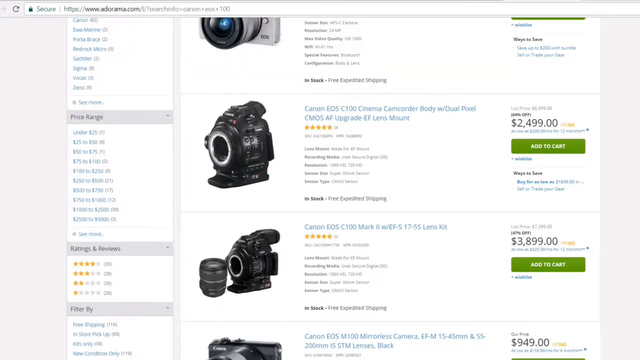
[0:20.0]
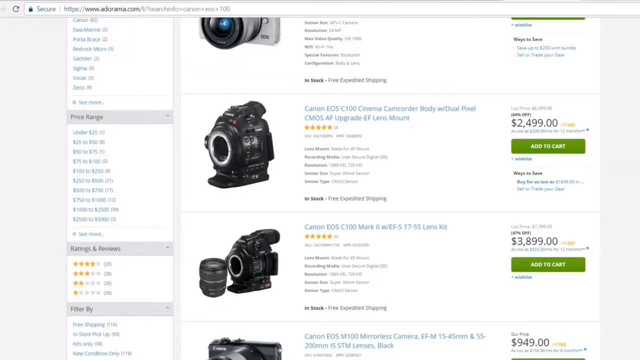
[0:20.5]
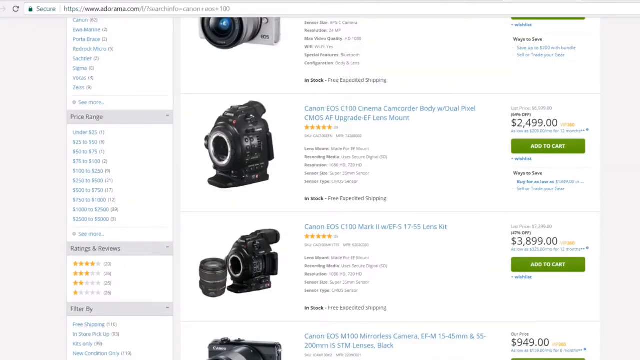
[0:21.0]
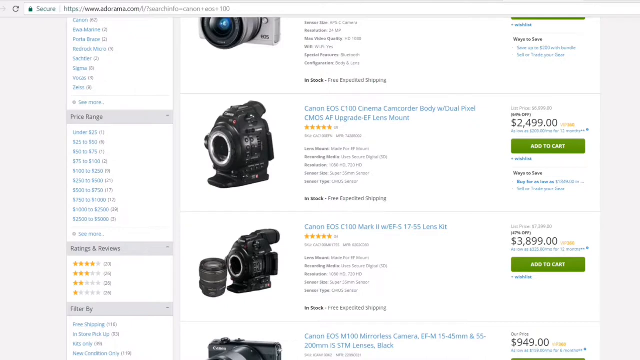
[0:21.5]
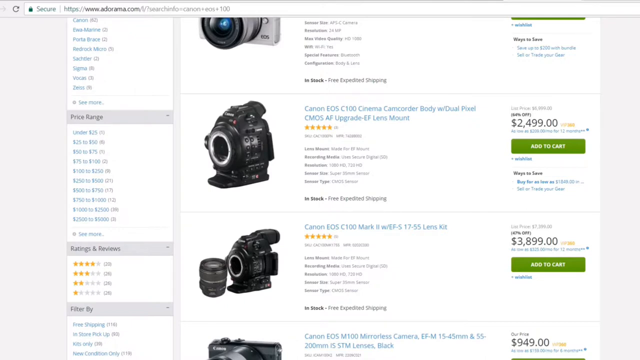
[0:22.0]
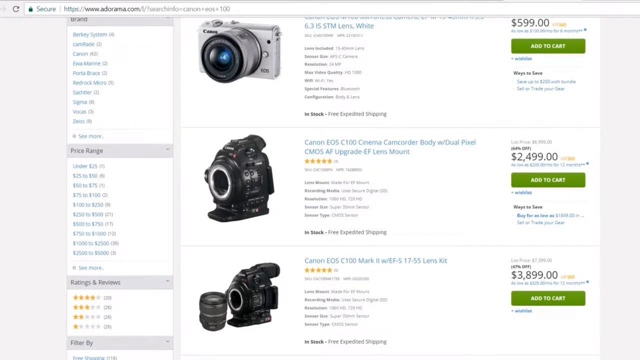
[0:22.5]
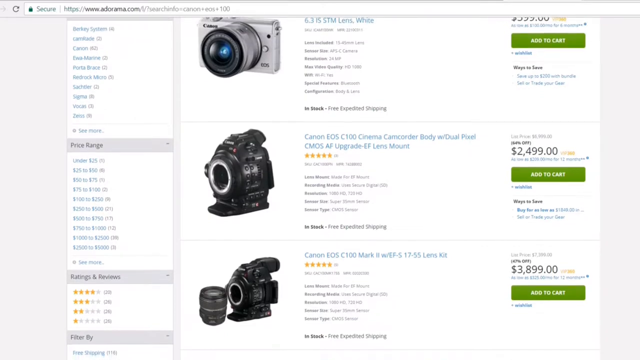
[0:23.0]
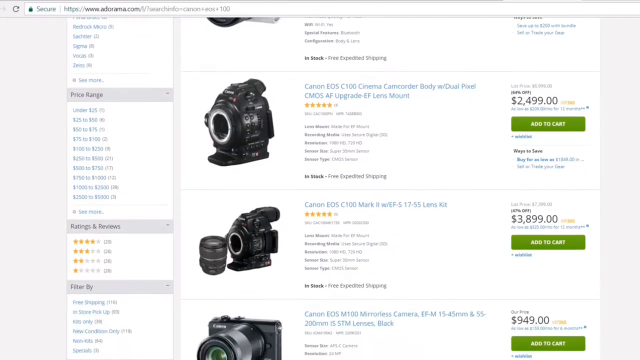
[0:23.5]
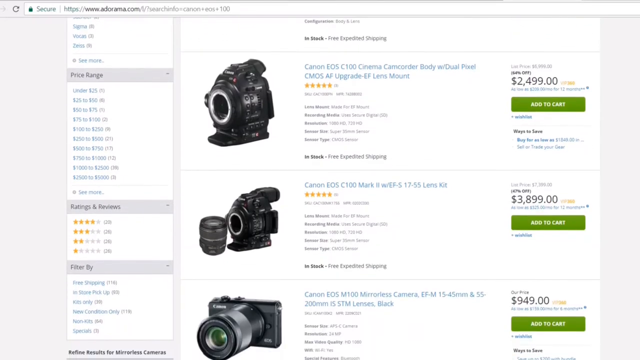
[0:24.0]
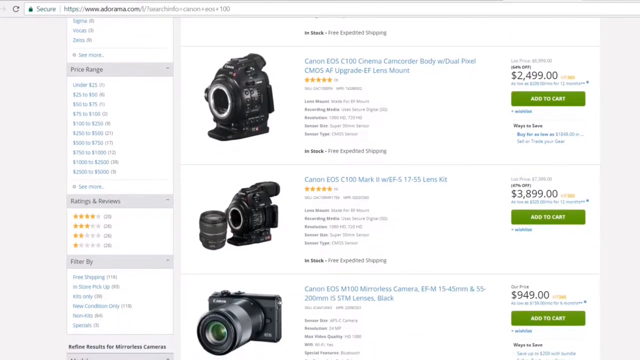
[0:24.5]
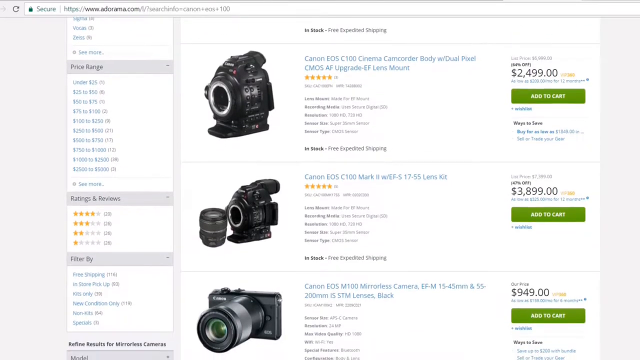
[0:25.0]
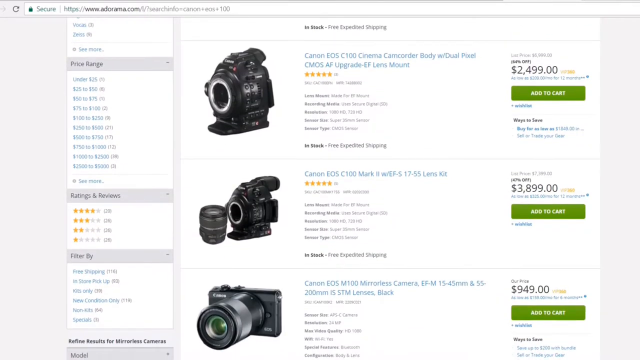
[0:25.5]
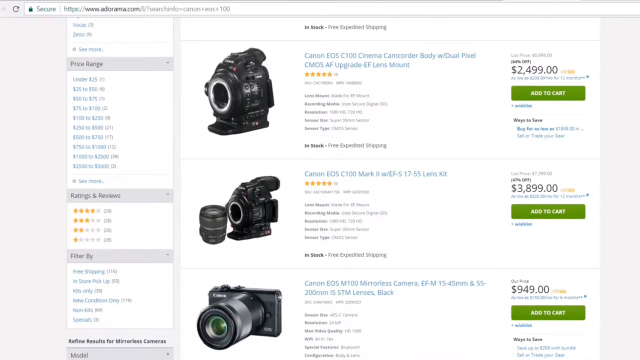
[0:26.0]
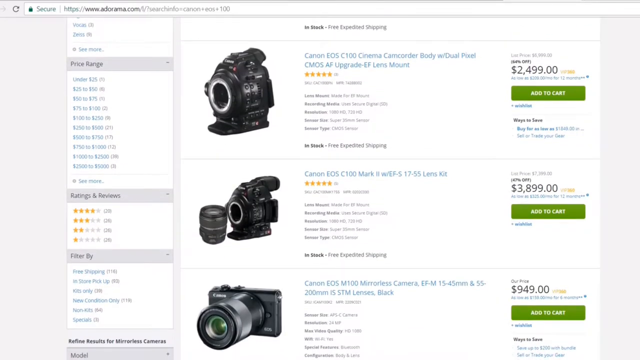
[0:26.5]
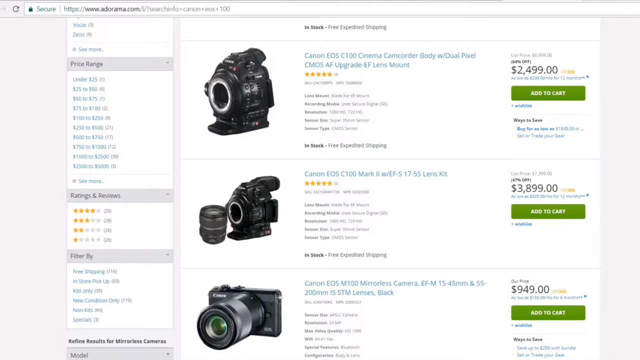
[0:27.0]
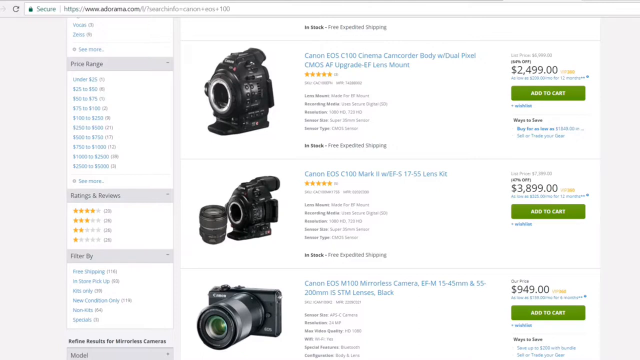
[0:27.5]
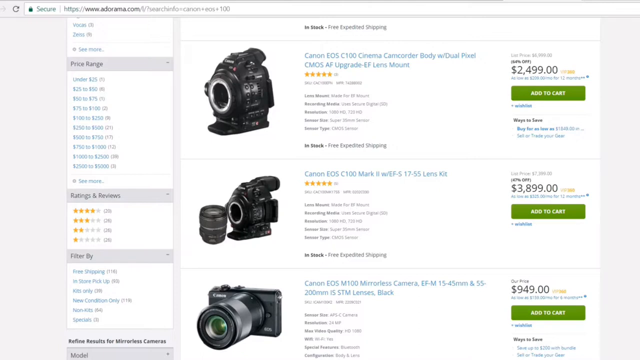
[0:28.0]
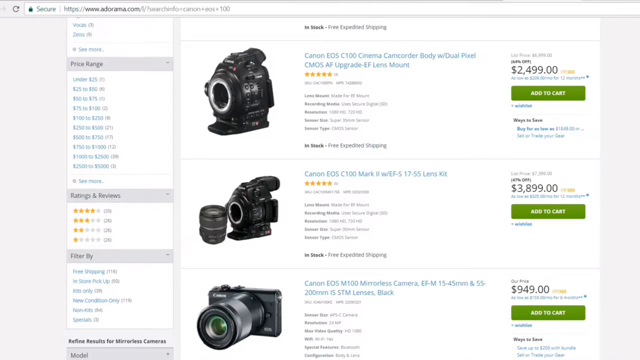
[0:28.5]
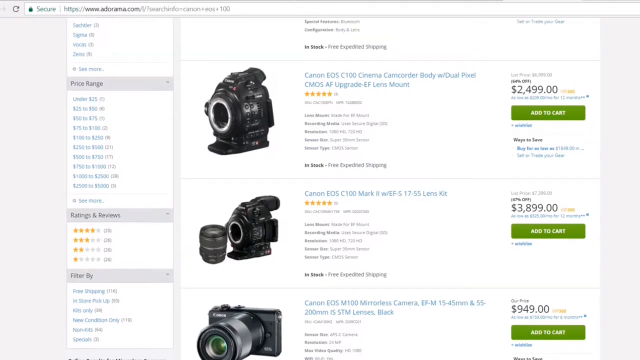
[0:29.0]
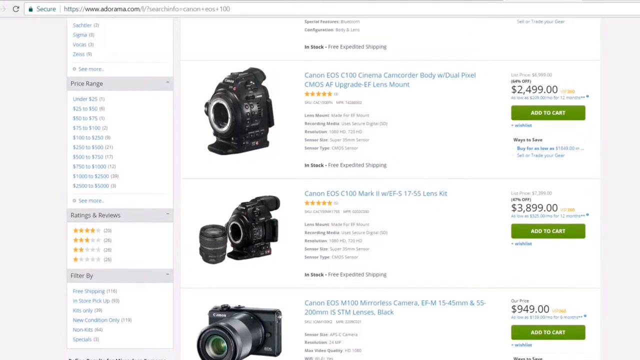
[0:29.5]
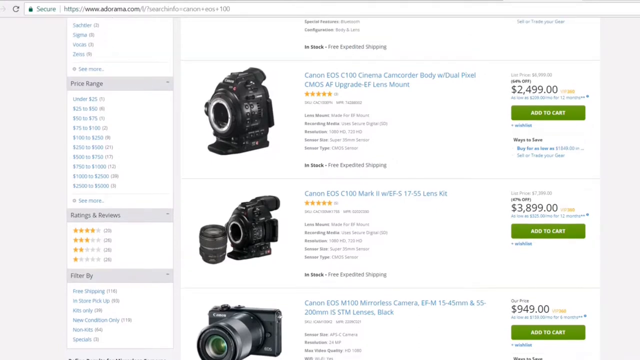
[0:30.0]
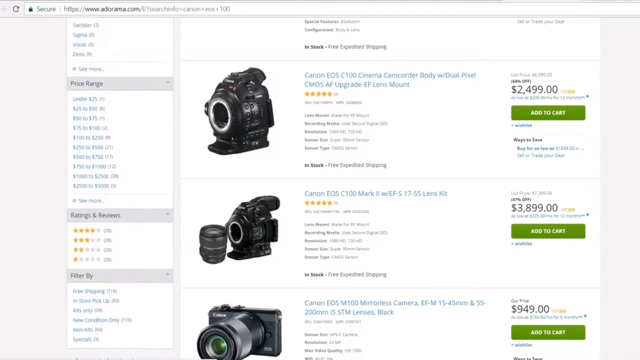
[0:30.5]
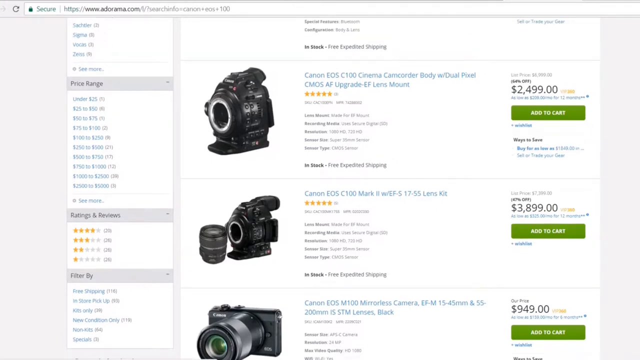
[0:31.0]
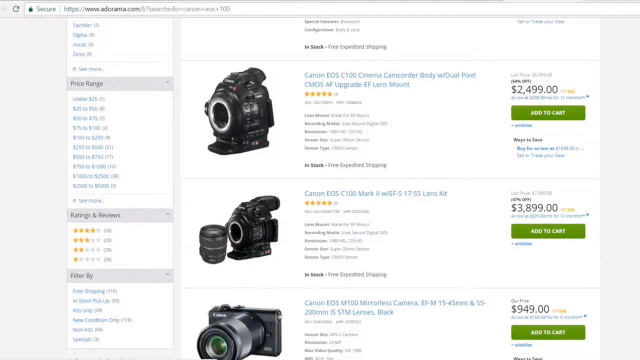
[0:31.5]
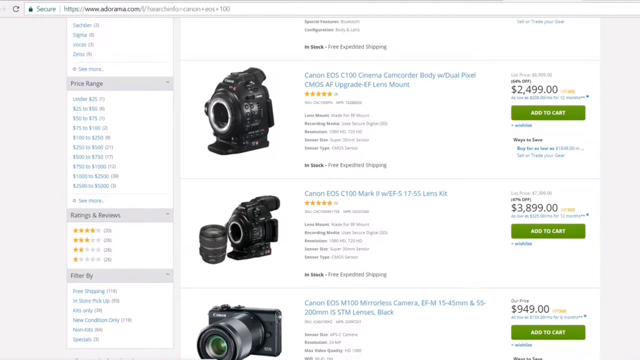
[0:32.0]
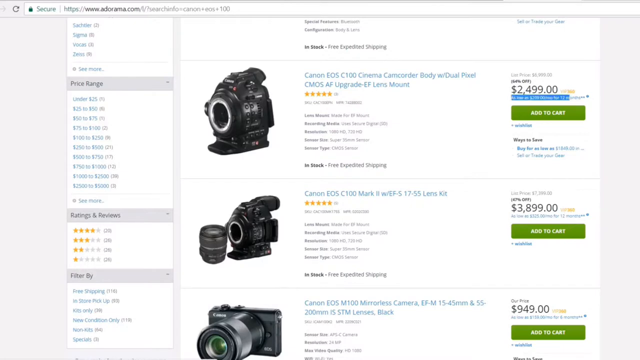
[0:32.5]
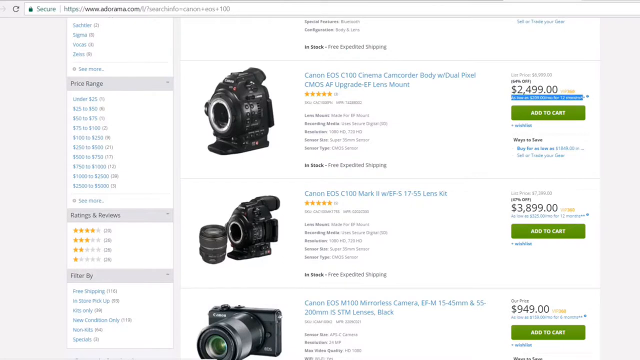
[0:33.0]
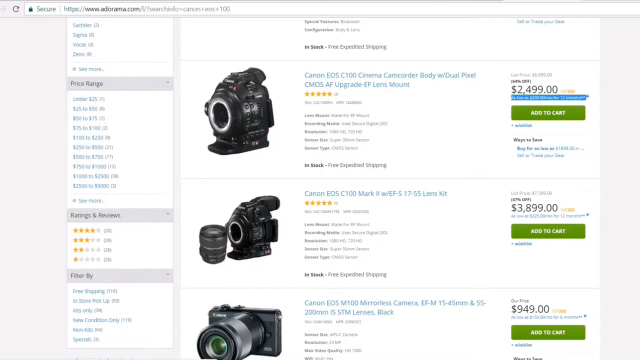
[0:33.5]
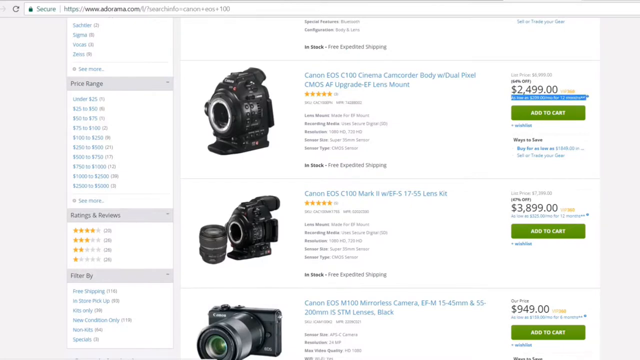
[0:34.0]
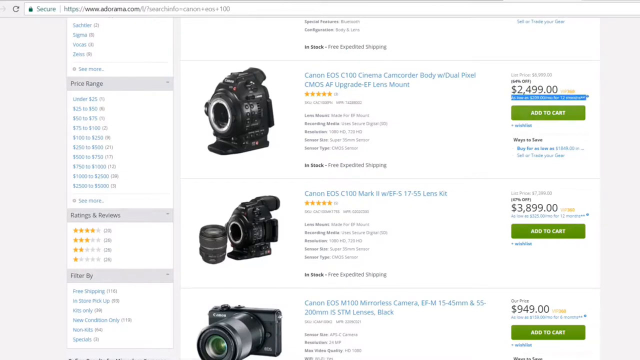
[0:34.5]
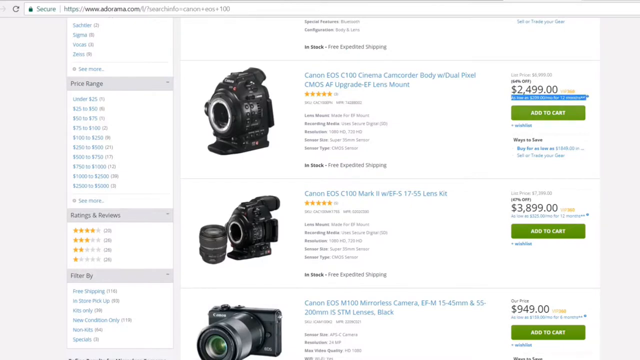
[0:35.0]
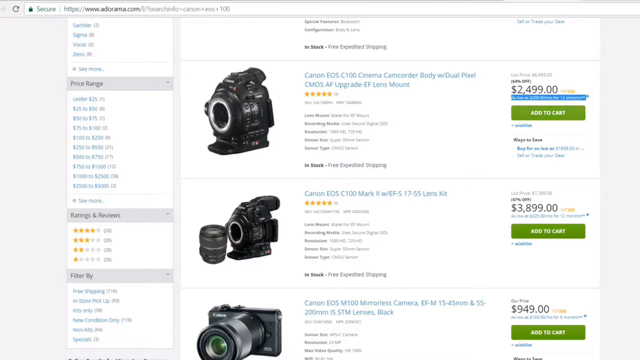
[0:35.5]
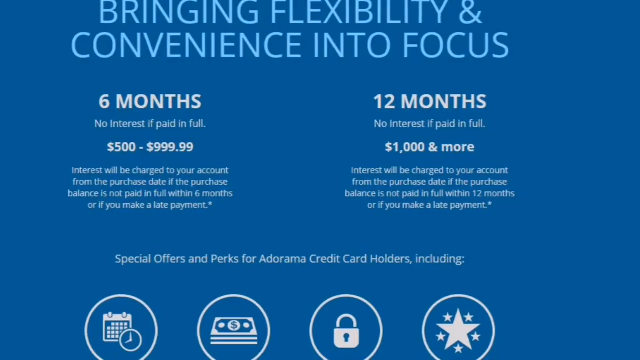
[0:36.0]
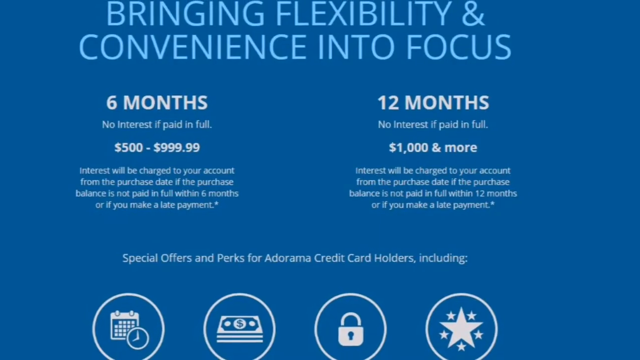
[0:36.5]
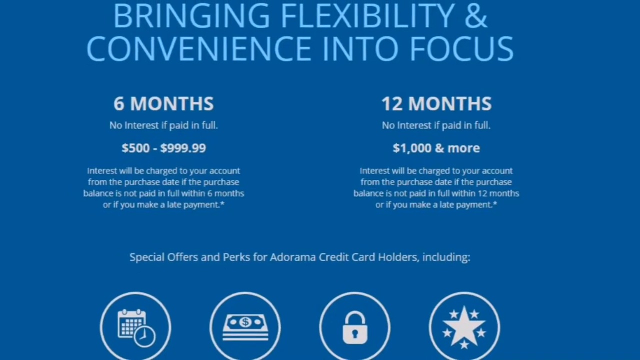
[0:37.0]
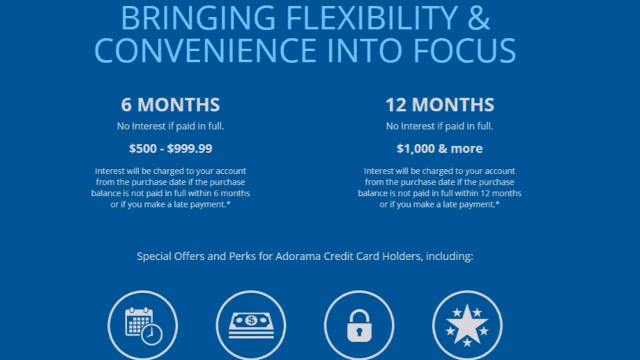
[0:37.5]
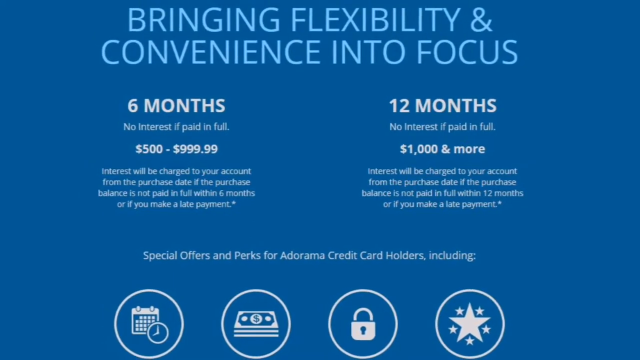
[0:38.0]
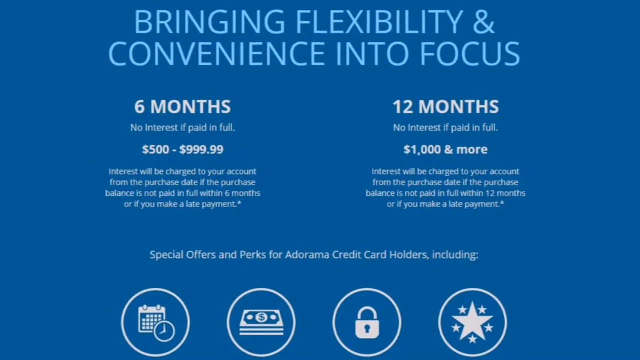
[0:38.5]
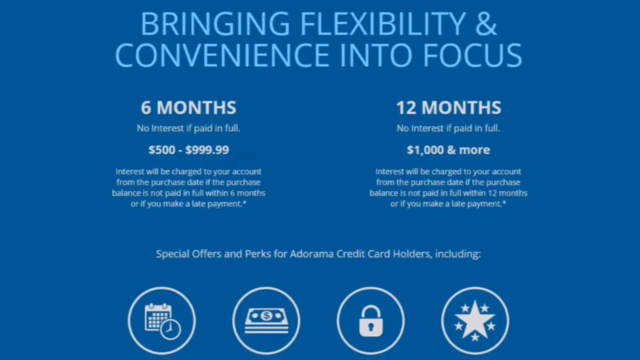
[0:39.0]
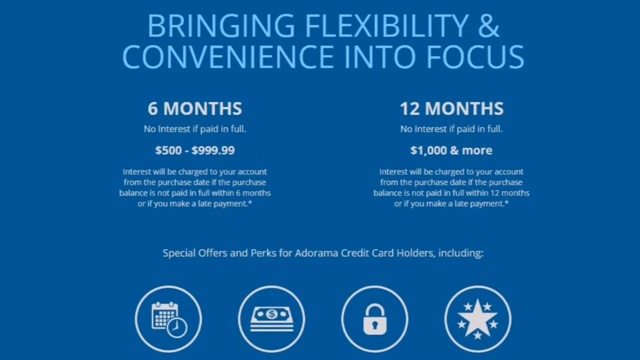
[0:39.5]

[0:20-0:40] A screen recording shows an online website with cameras, which looks like a generic online retailer. It transitions to a blue screen with the title "bringing flexibility and convenience into focus." Underneath the title are two columns, one reading "six months, no interest, if paid in full" and the other "12 months, no interest, if paid in full." Under six months it says "$500 to $999," and under 12 months it says "$1,000 and more," with special offers underneath. The page gives options for payment. Around three products are shown, with prices ranging from a couple of thousand to a few thousand dollars.